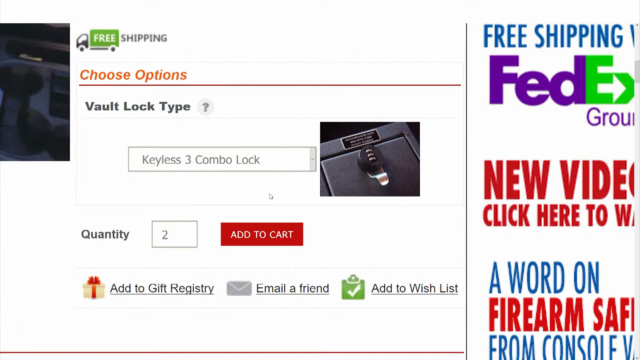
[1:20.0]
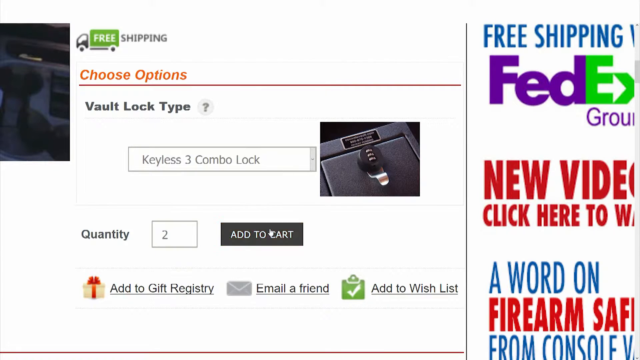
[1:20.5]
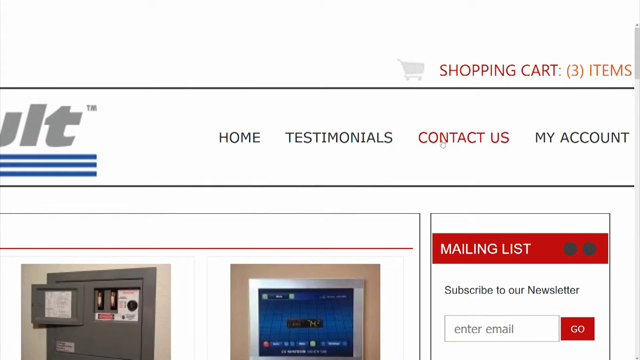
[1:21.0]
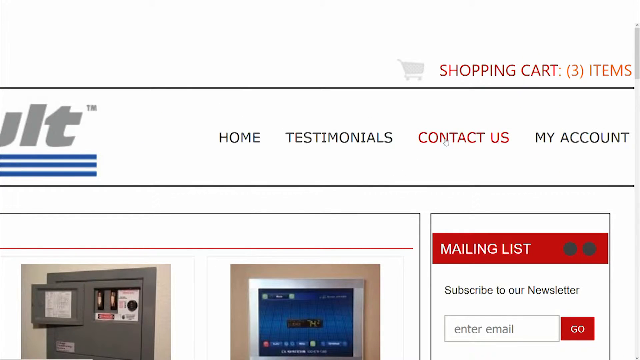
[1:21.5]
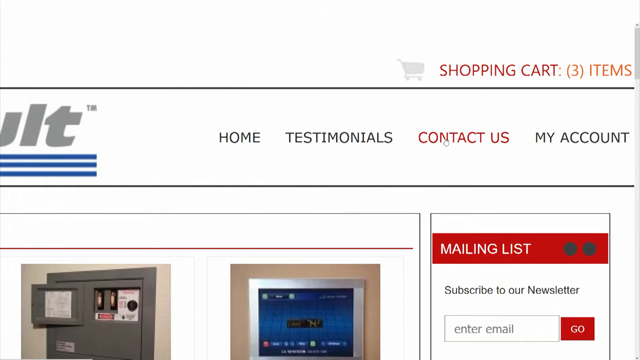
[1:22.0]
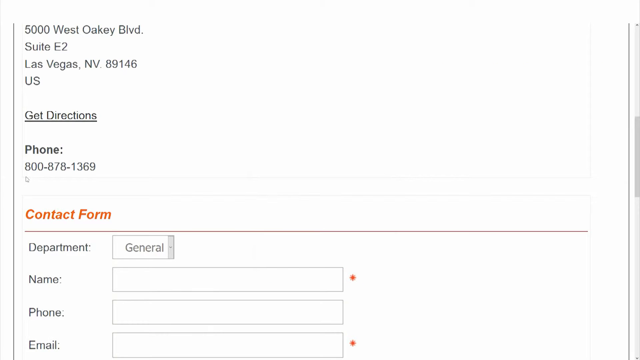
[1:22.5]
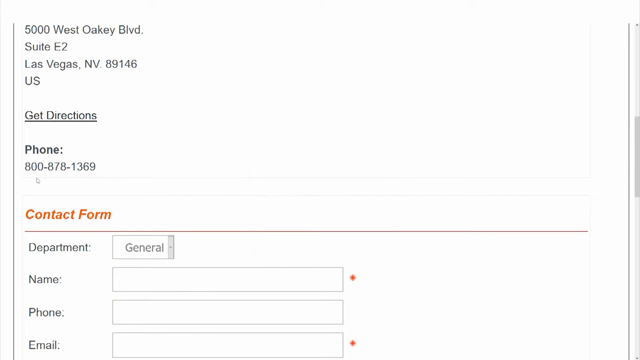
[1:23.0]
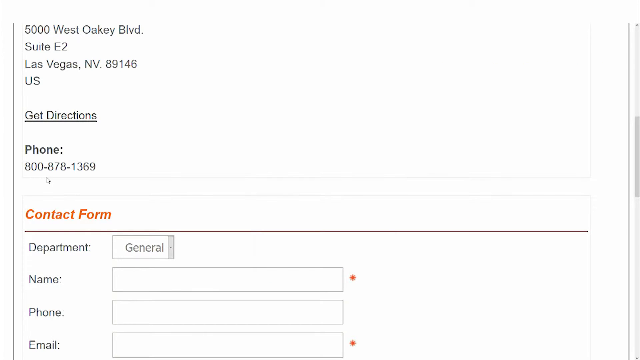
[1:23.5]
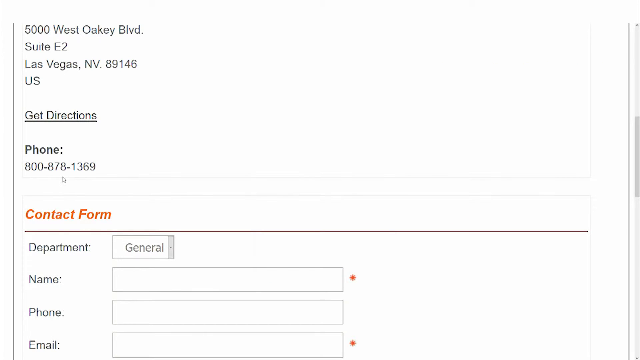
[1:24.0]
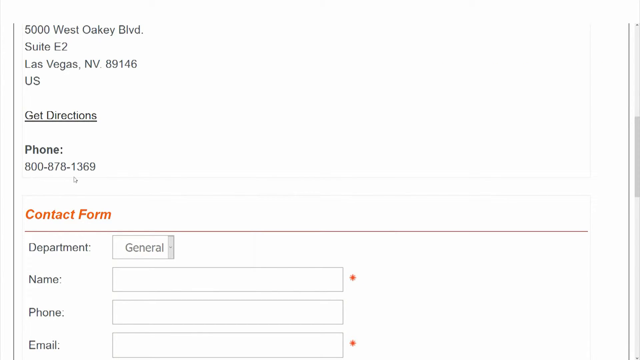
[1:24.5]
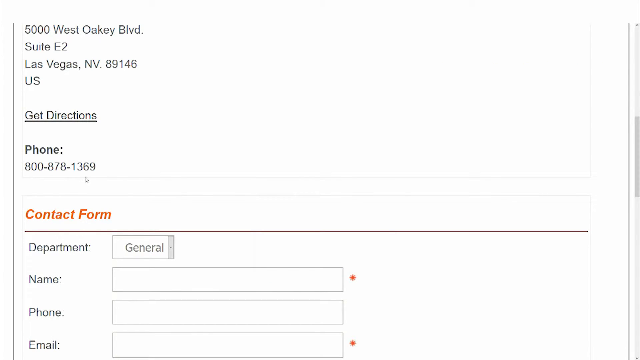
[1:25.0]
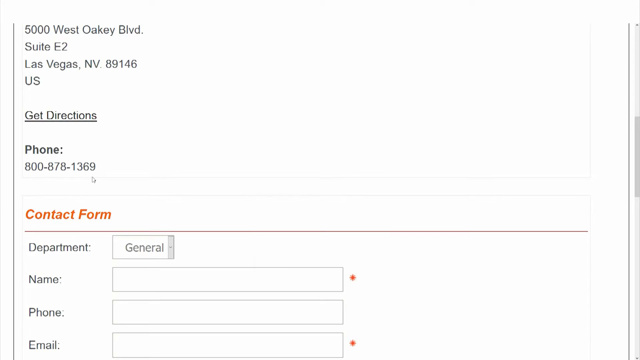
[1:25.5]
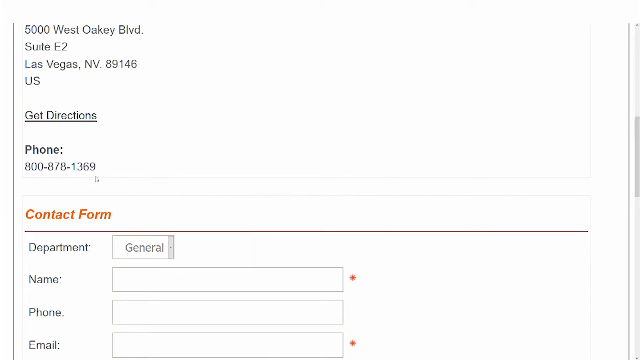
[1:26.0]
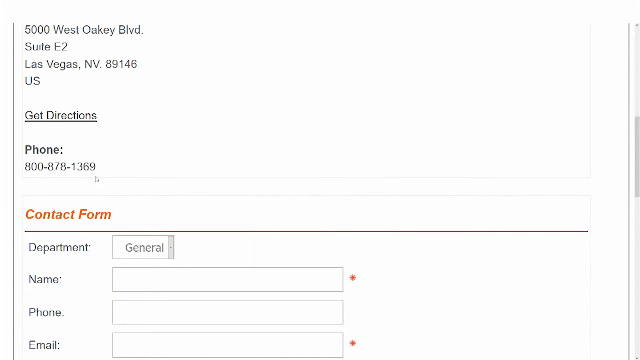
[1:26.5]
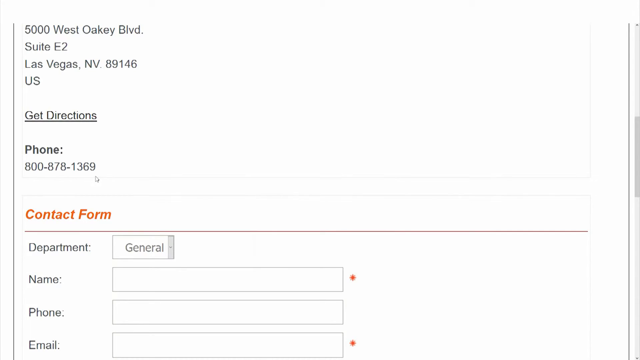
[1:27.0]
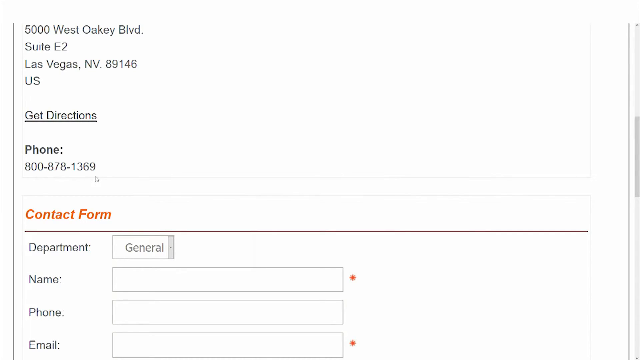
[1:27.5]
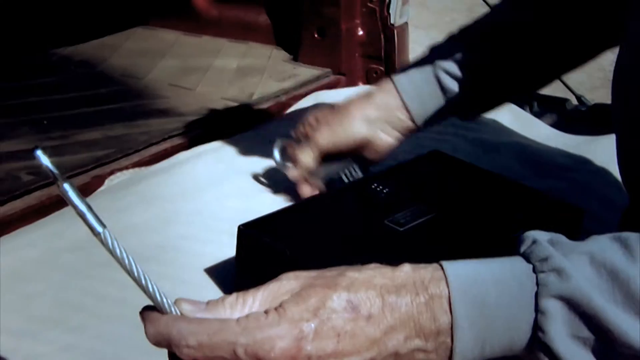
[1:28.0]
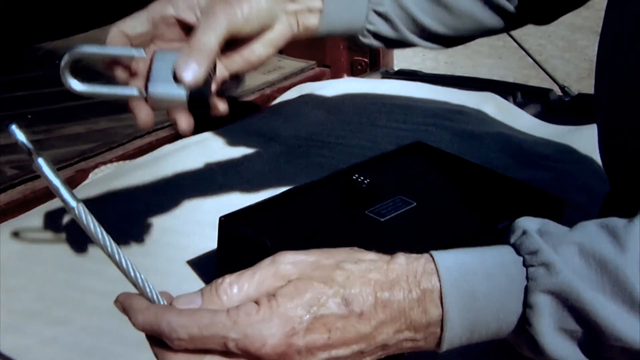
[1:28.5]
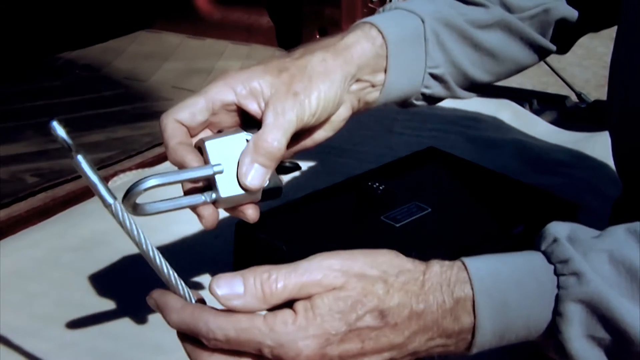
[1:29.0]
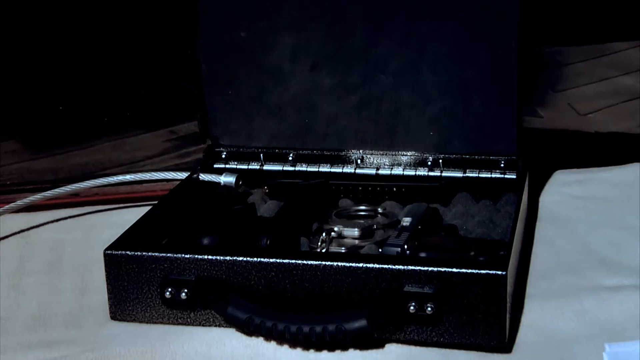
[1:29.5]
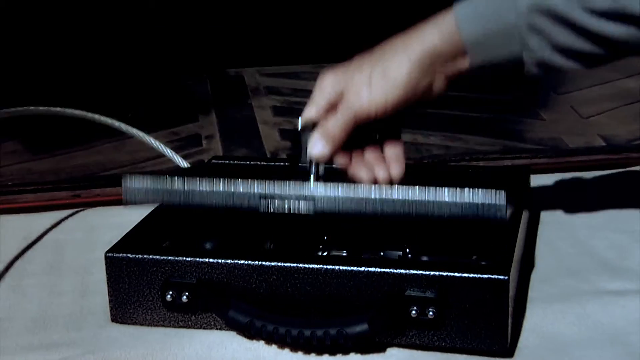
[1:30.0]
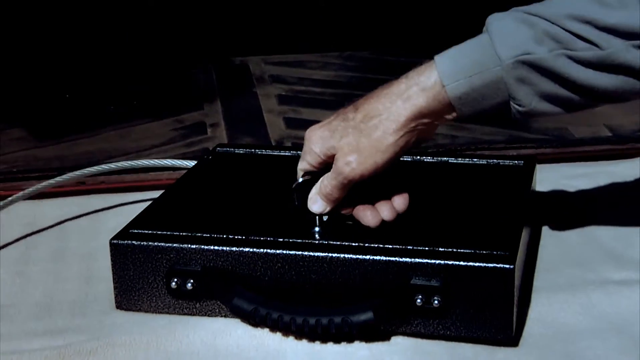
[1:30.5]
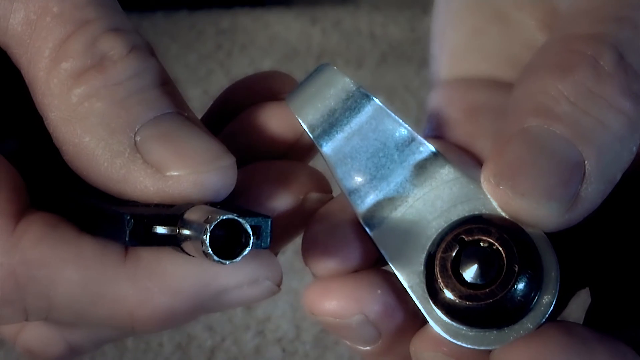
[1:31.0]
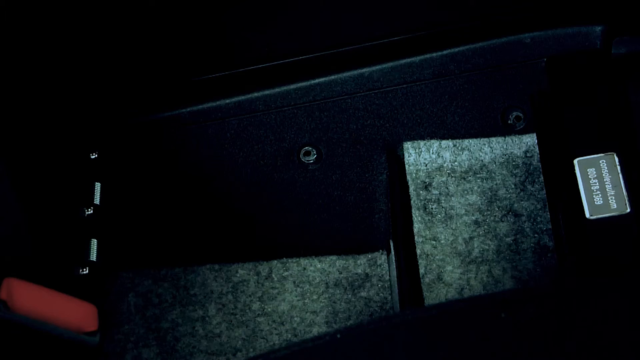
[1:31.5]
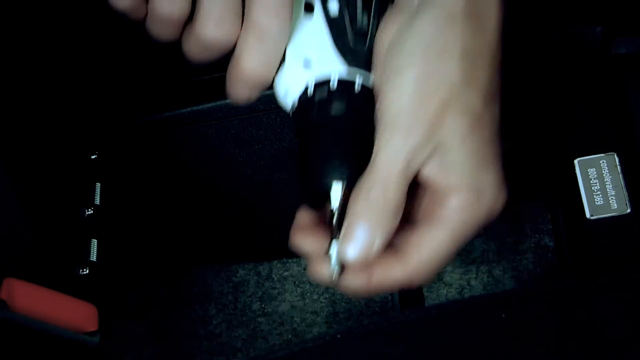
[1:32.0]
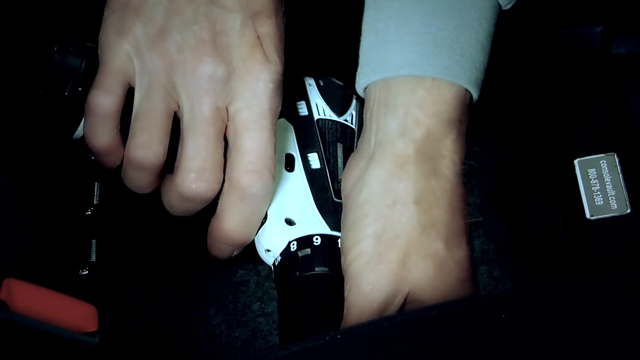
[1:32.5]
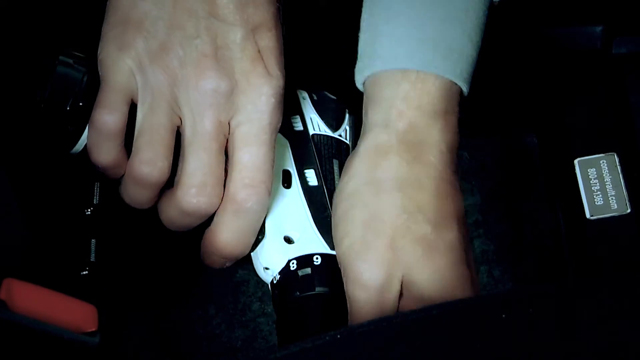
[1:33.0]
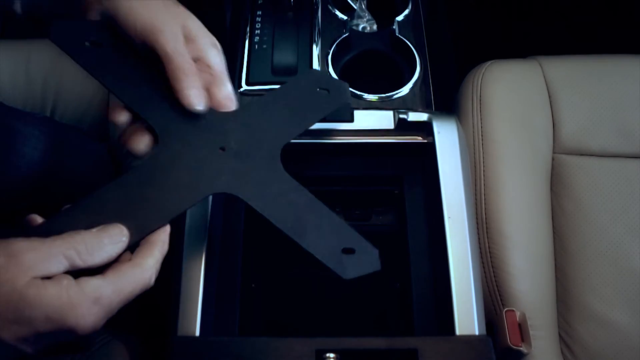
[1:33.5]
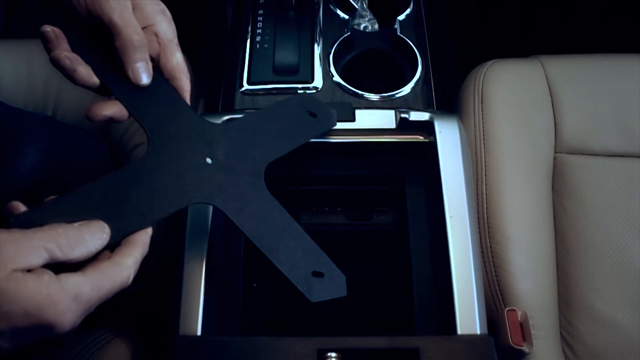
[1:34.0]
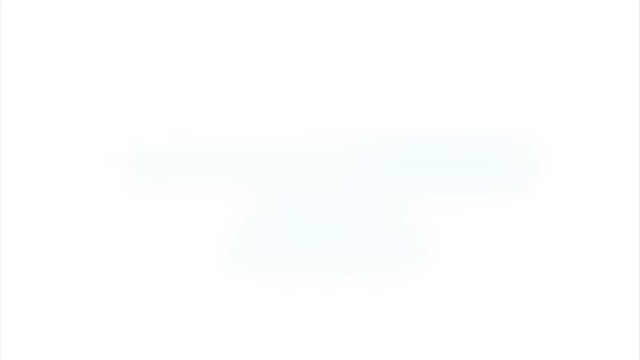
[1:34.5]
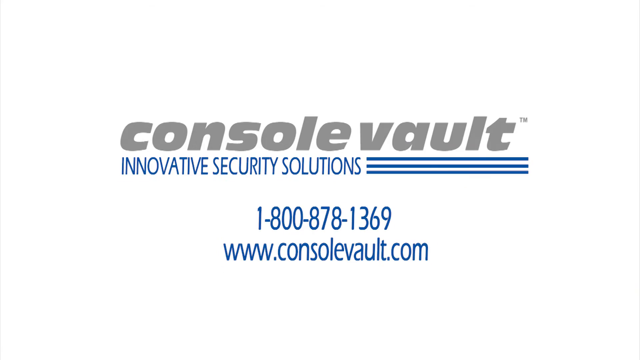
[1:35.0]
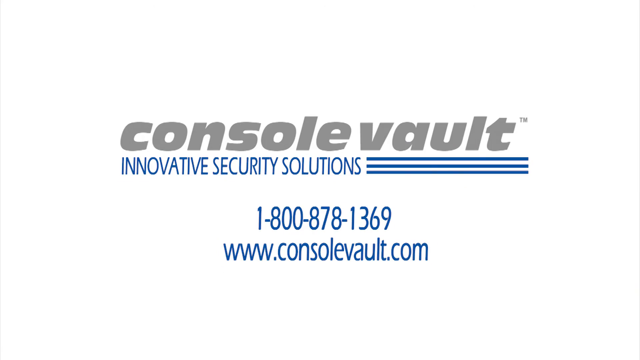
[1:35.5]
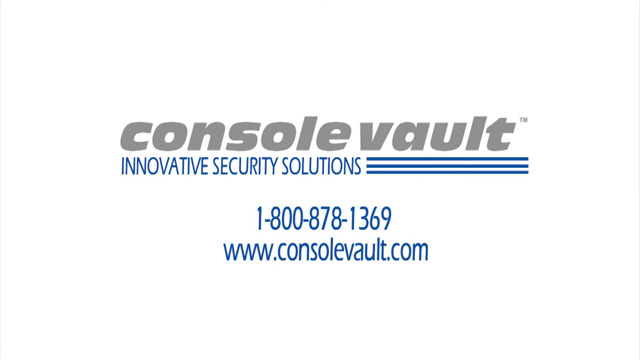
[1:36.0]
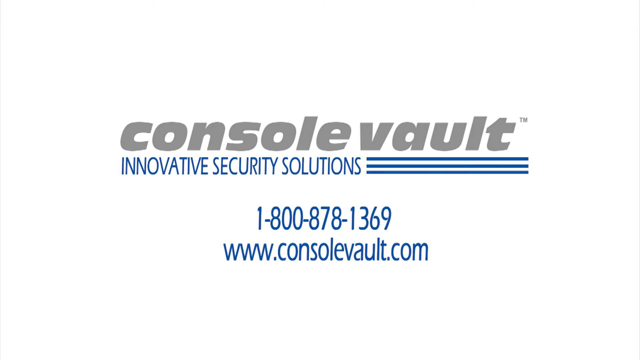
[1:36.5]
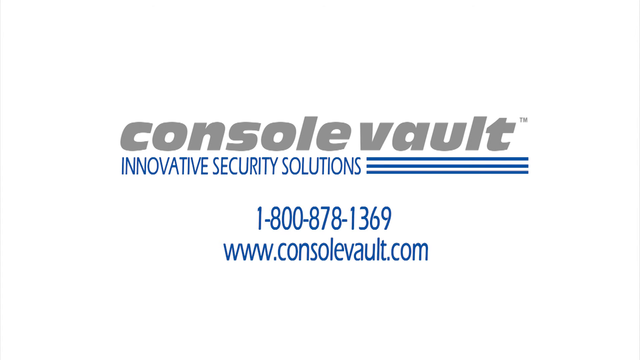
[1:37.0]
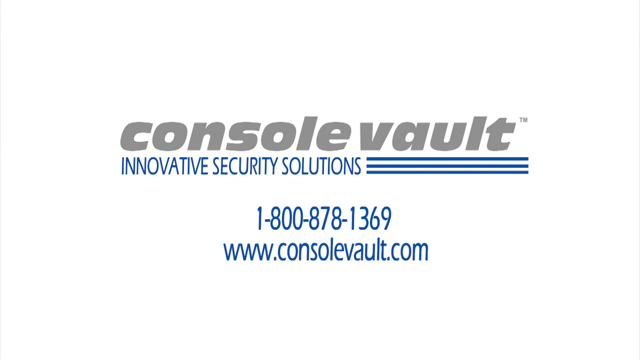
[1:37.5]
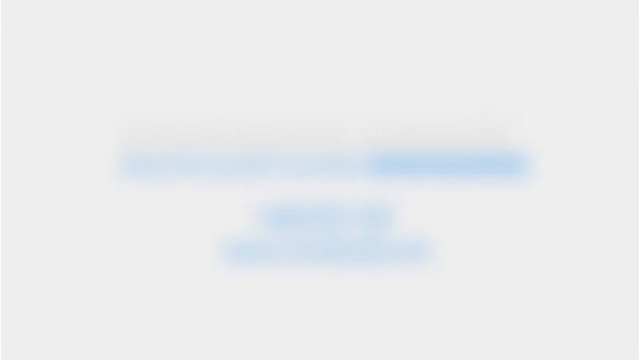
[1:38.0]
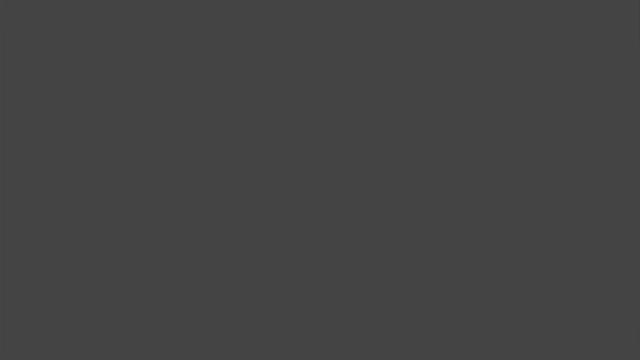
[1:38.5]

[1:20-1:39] The cursor clicks Add to Cart, and the screen transitions to a zoomed-in portion of the website where the cursor hovers over the Contact Us button. A zoomed-in contact page appears with a phone number, a business address and a contact form. The cursor hovers over the phone number, circling it from left to right to emphasize the numbers. The screen then transitions to a video of a man with gray sleeves holding a lock and a wire. A case is closed on the wire, and several different angles show how a vault is installed into a center console. The screen fades to black, and the Console Vault logo, phone number and website are shown against a white background. The screen then fades to black and the video ends.